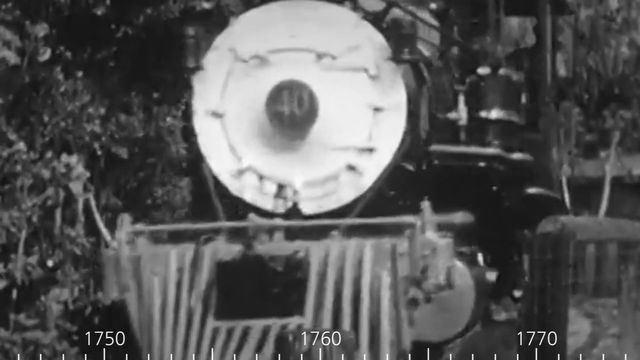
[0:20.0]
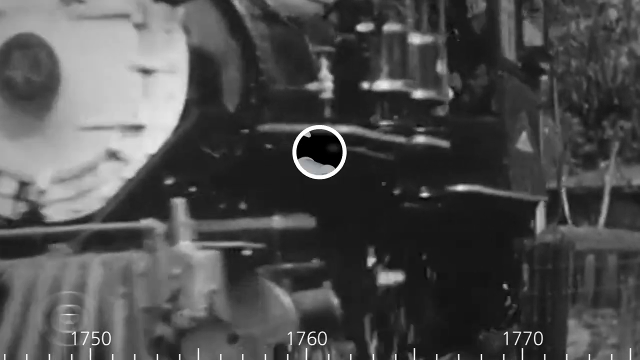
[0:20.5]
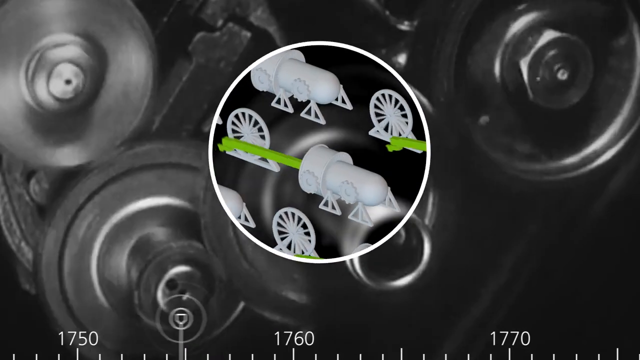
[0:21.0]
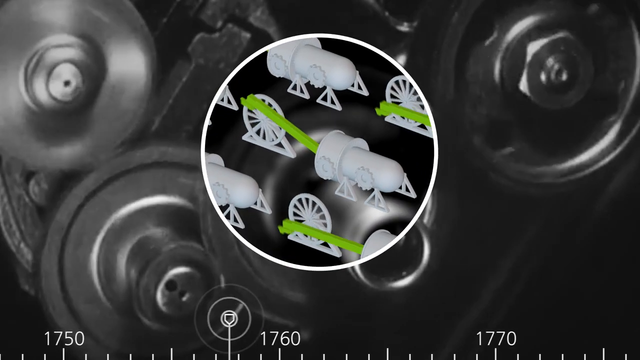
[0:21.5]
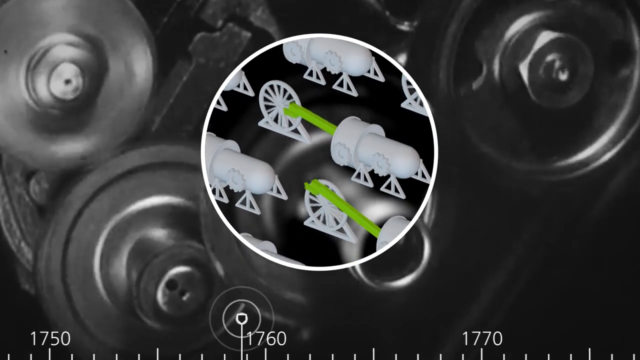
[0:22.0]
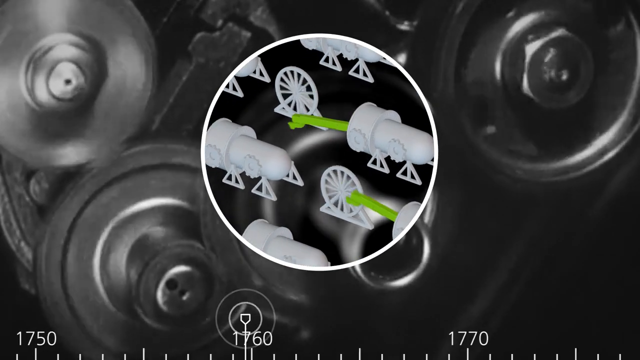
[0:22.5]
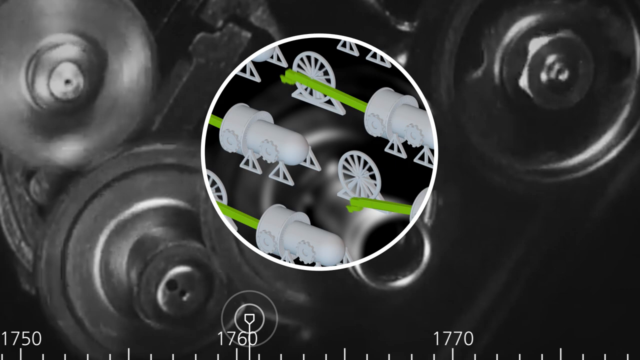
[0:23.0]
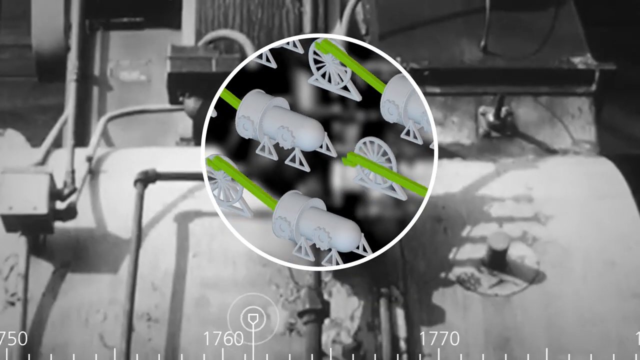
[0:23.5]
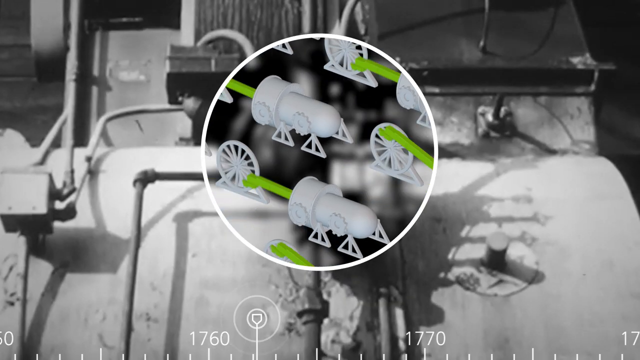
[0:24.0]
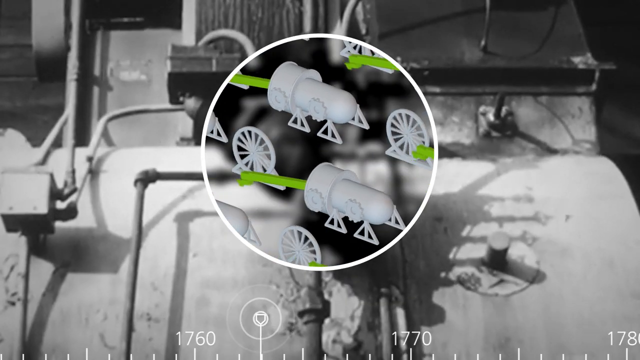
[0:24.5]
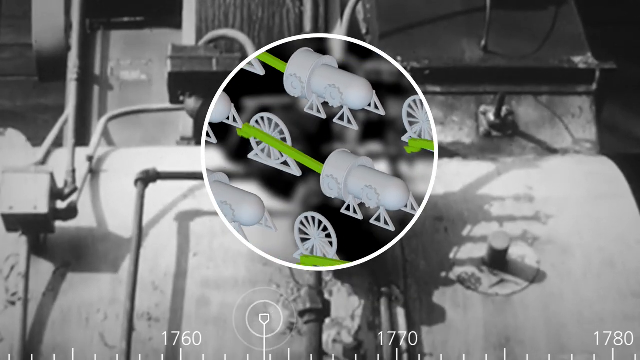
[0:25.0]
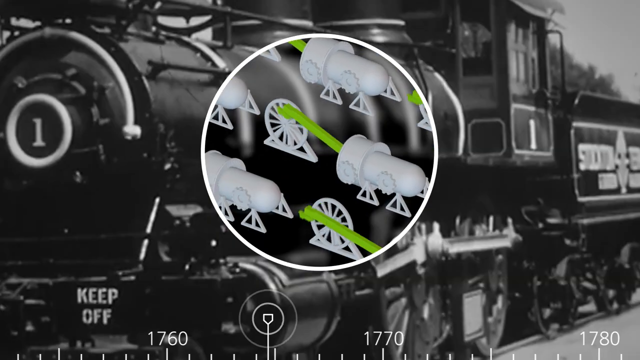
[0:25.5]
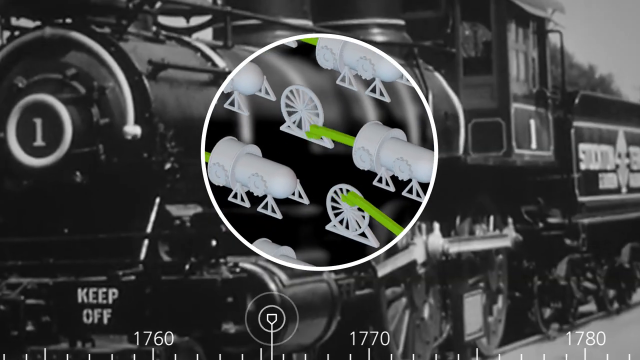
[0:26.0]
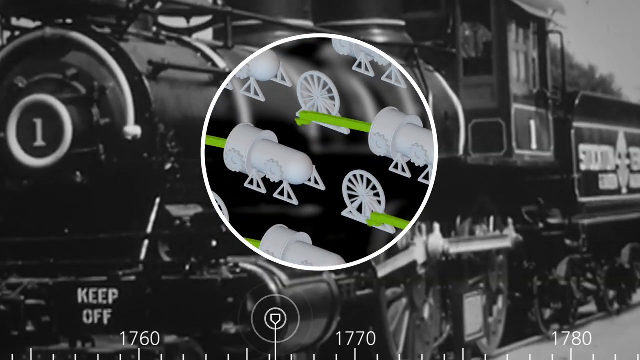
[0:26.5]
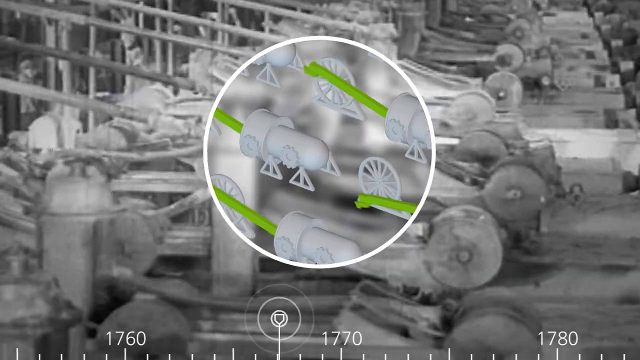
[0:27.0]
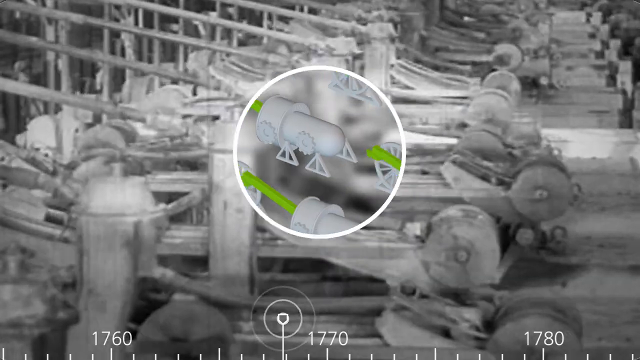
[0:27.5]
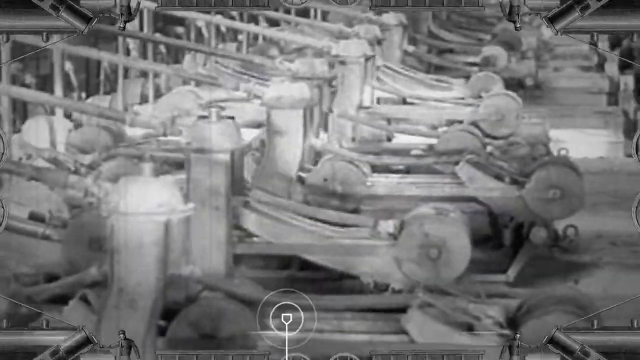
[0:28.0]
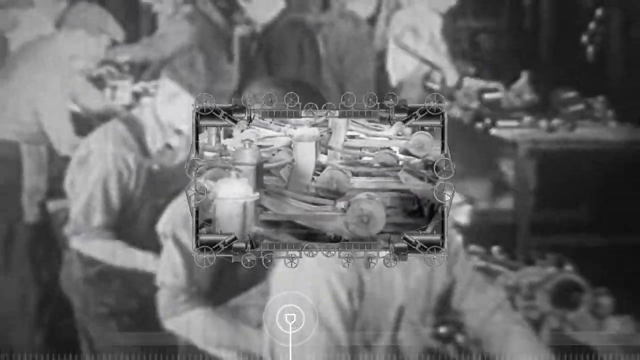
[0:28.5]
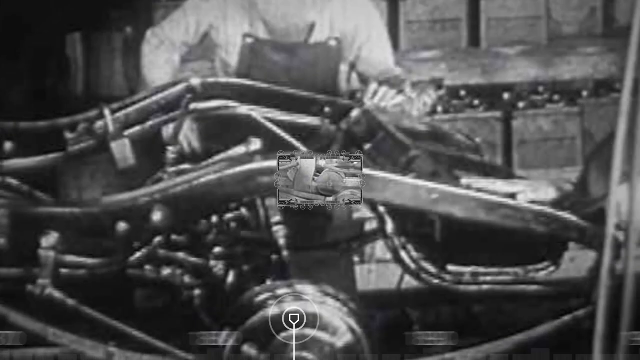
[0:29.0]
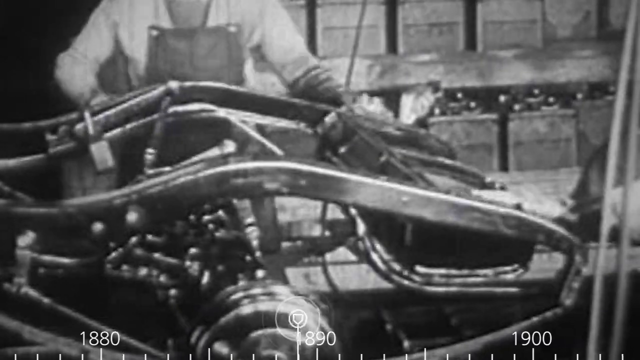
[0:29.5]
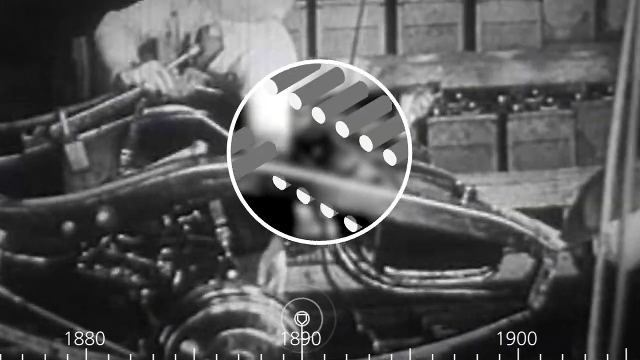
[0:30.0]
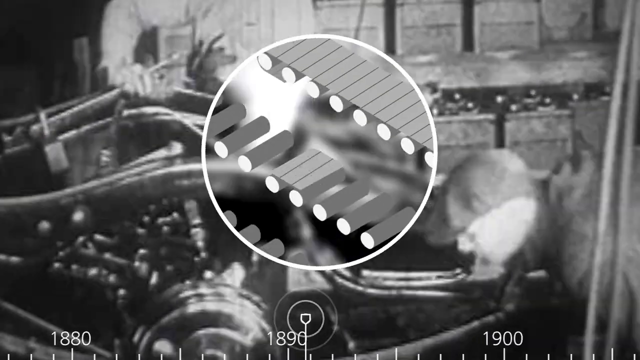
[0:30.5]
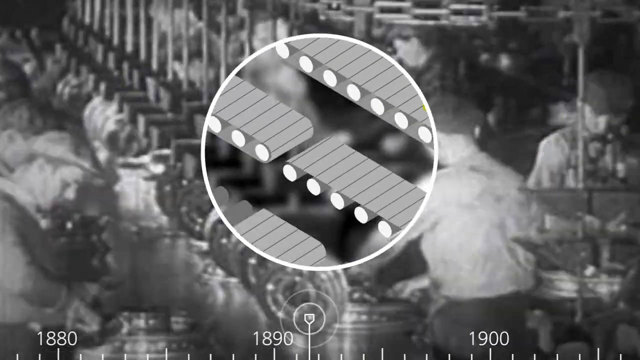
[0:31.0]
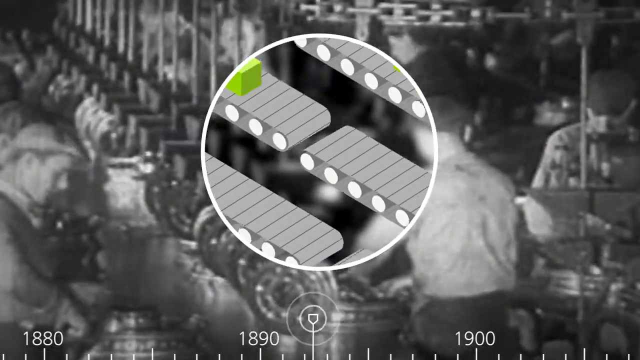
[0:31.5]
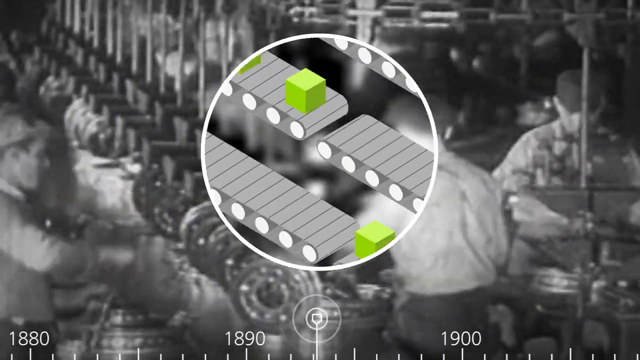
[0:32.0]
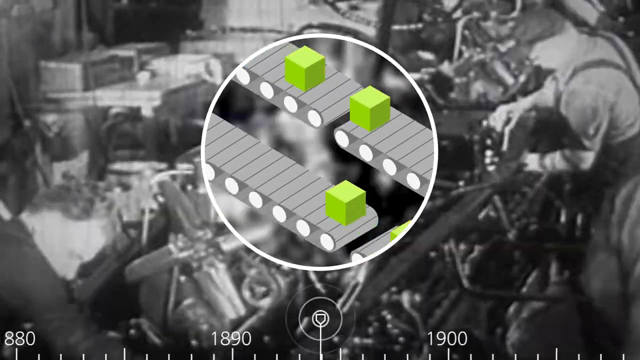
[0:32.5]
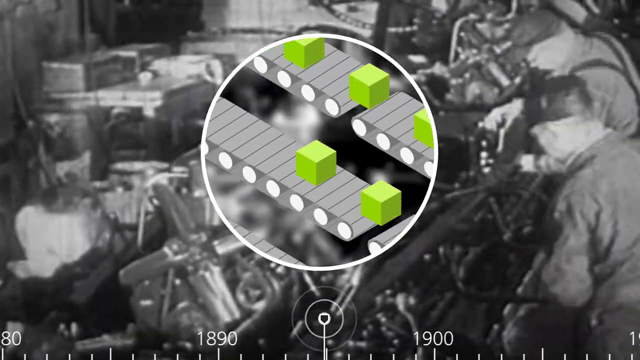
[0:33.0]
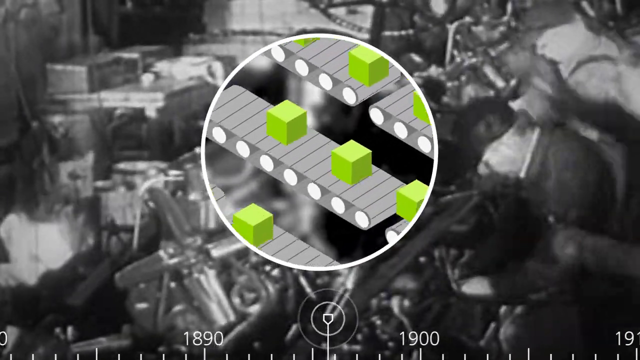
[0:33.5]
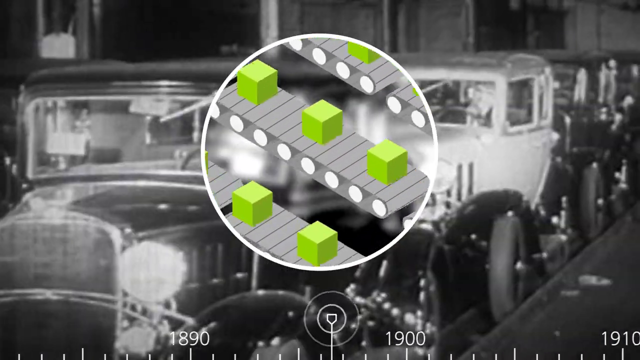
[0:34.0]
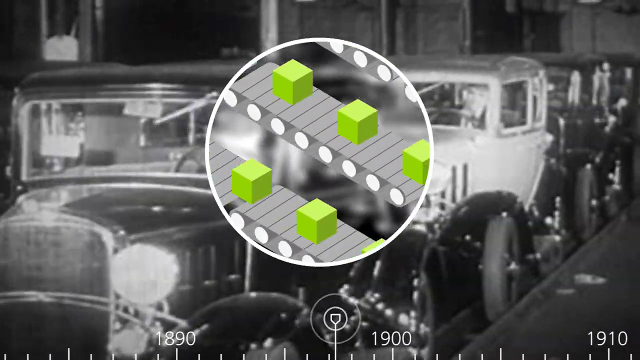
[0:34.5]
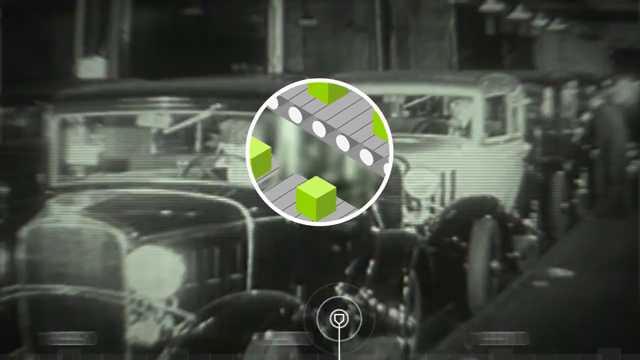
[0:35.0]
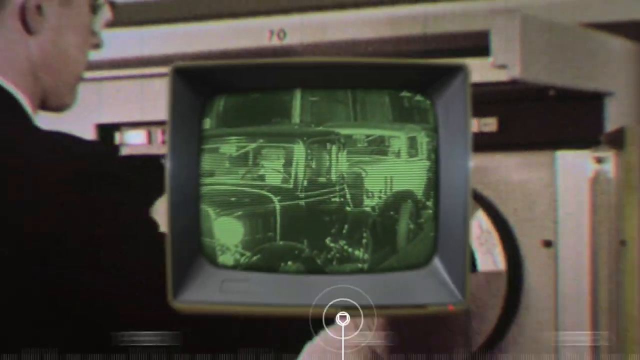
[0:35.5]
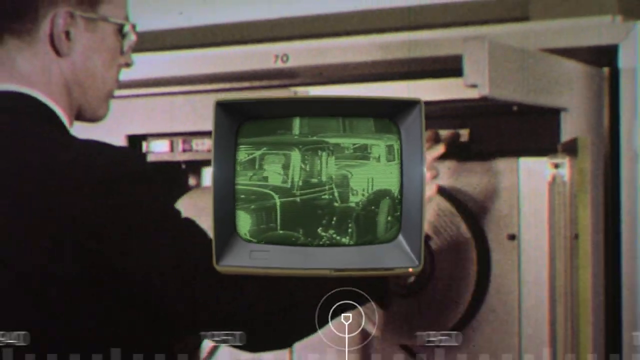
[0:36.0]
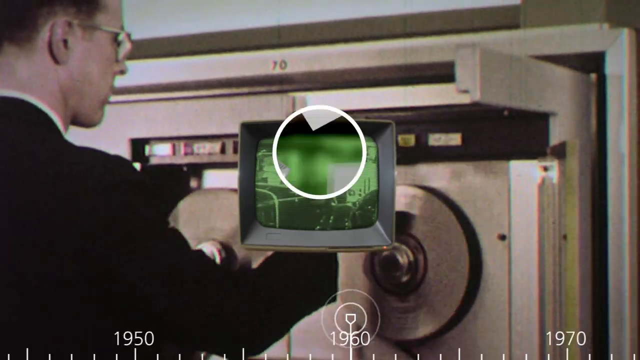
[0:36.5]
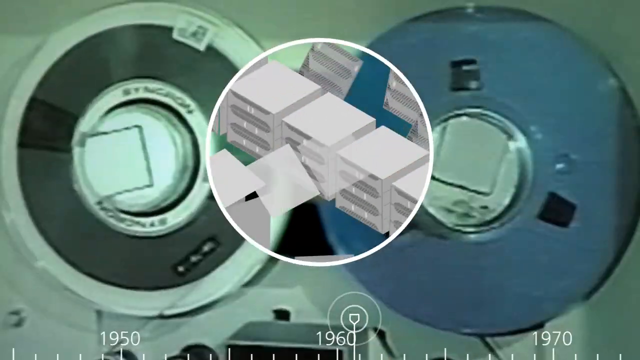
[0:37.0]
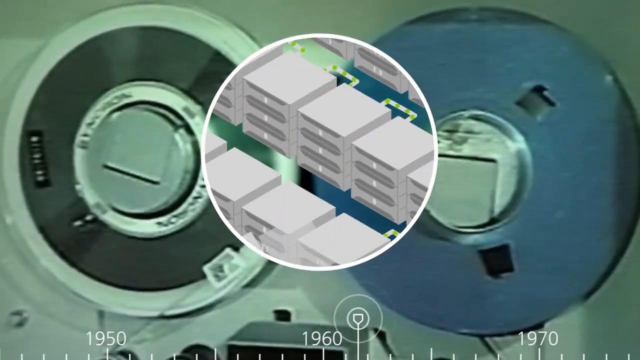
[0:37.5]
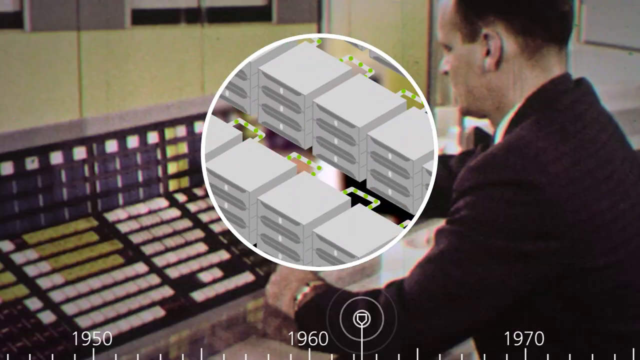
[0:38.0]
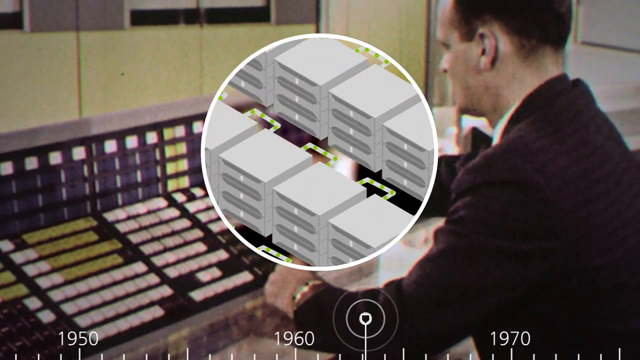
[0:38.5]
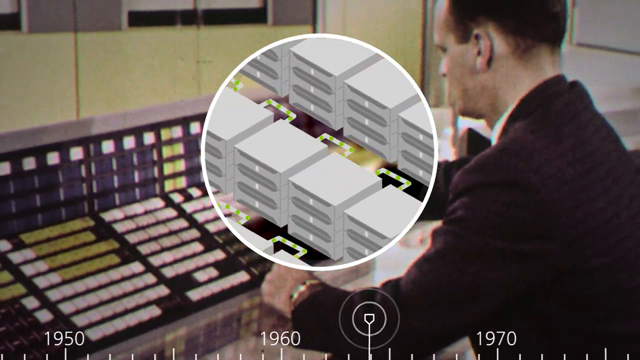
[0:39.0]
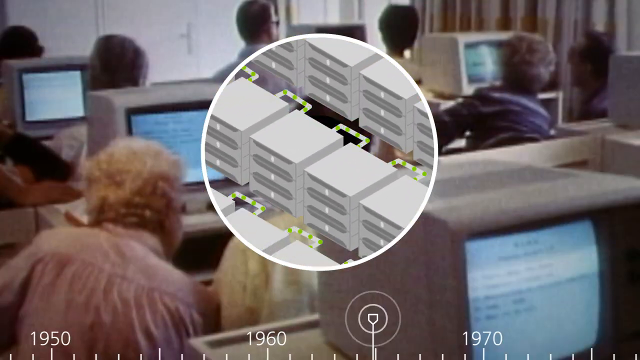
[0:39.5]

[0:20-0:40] A black and white image shows a train coming down a track. As the train moves forward, the image turns into another, where there appear to be different types of trains in the background and a circle in the middle containing what appear to be turning wheels, showing the motion of how they turn. The background changes again, still to a black and white image, showing more wheels, and then to an image of men working on different types of machinery. A small circle pops up in the middle of the screen with what look like conveyor belts carrying small green boxes. The image then changes to a small TV where a man stands working on some sort of machinery, and then to a different man working in front of some sort of board with different buttons.